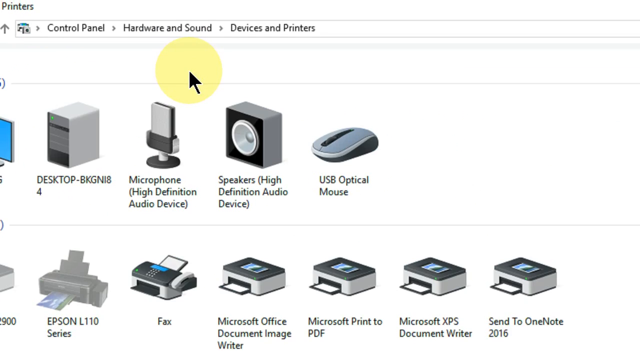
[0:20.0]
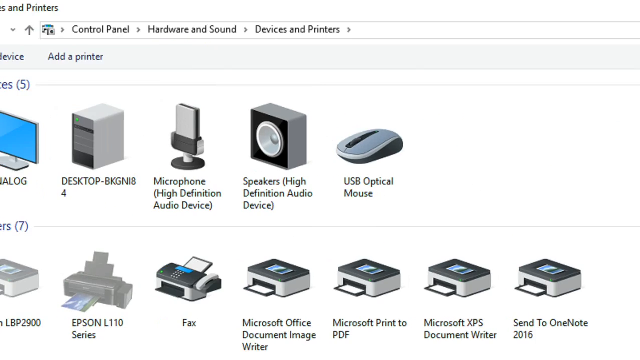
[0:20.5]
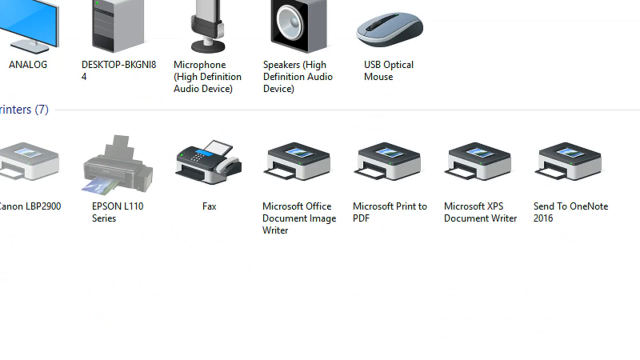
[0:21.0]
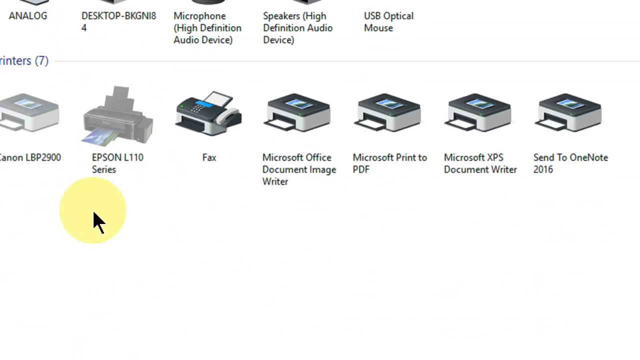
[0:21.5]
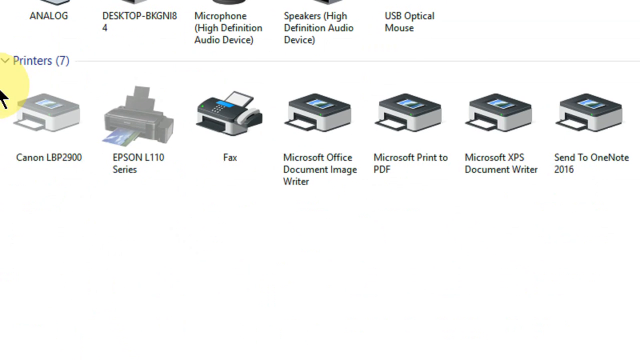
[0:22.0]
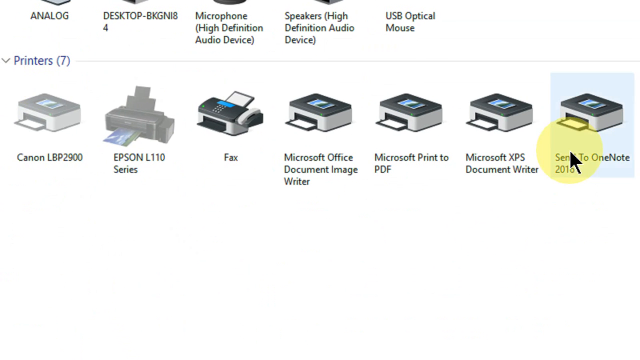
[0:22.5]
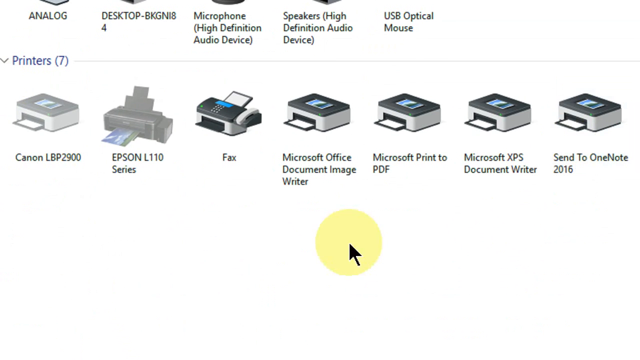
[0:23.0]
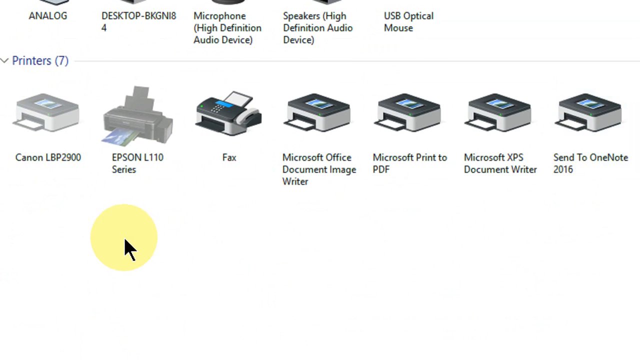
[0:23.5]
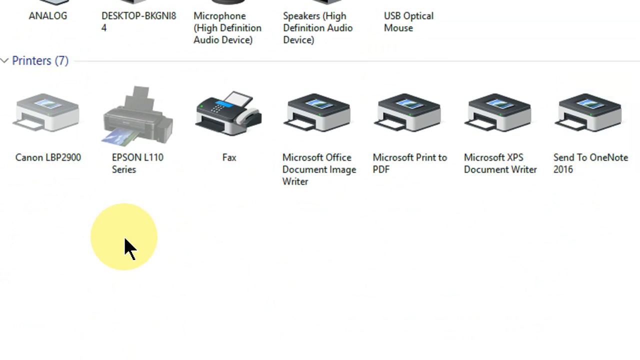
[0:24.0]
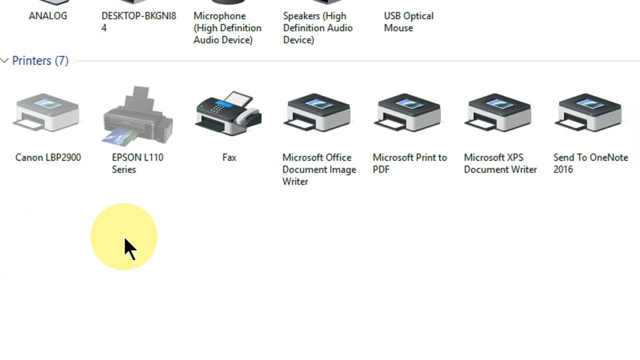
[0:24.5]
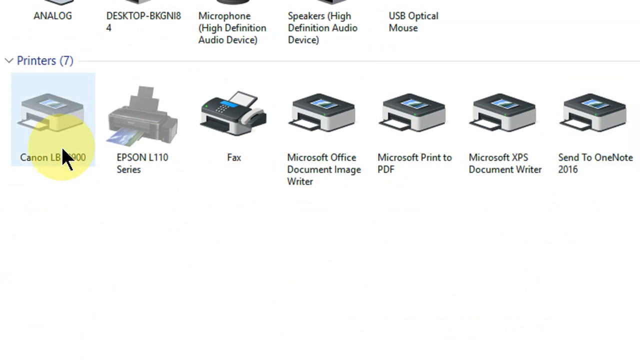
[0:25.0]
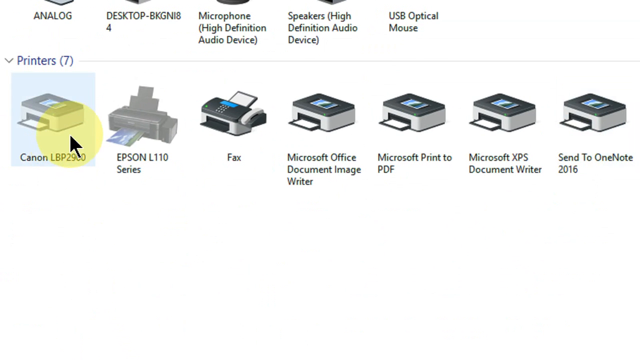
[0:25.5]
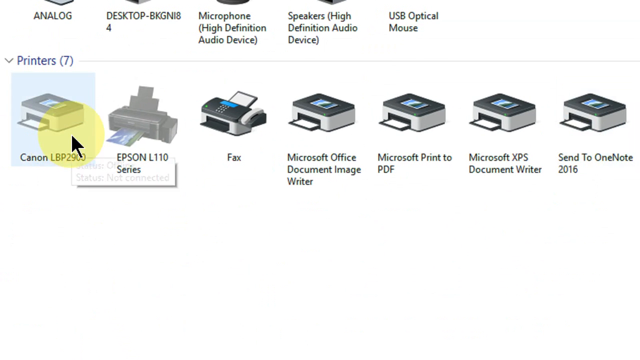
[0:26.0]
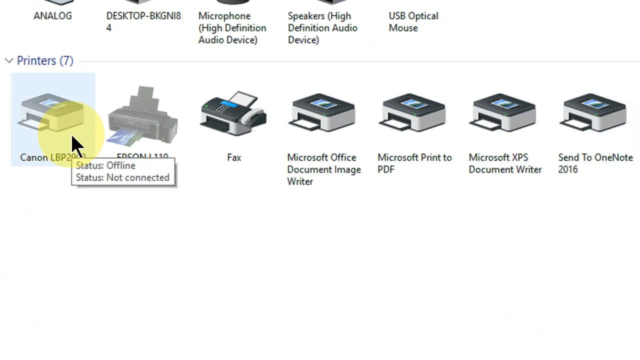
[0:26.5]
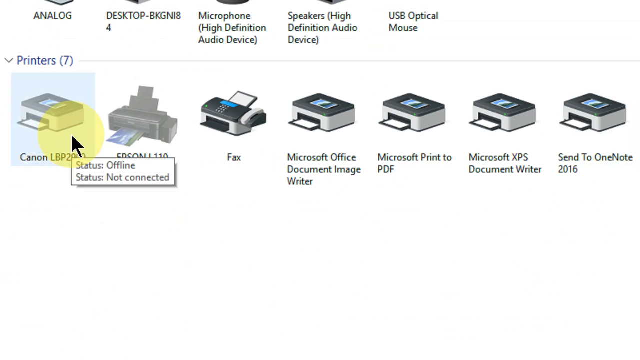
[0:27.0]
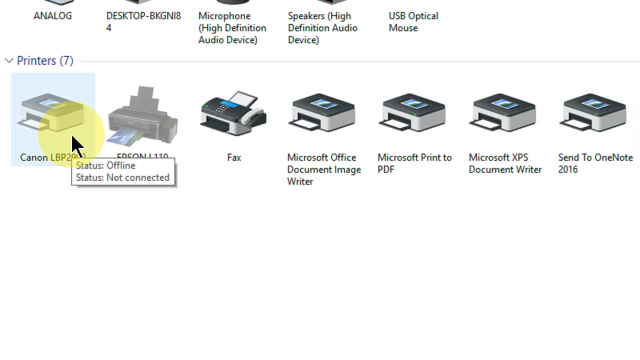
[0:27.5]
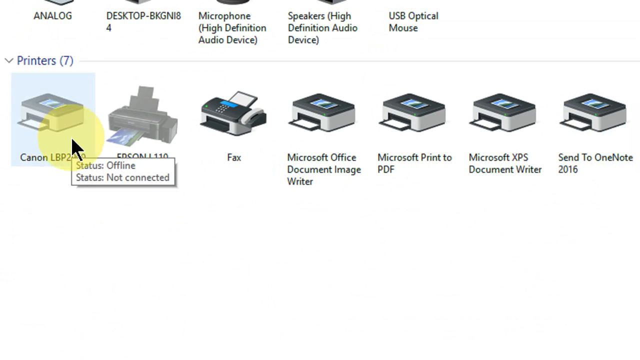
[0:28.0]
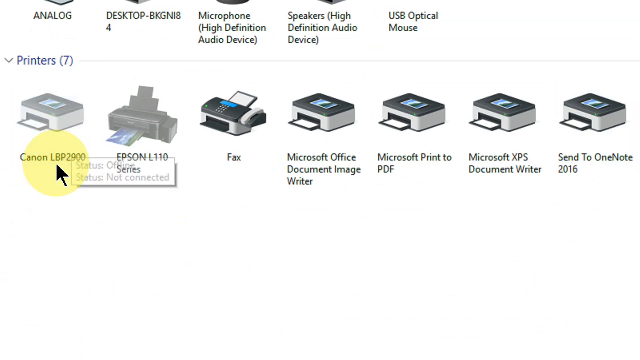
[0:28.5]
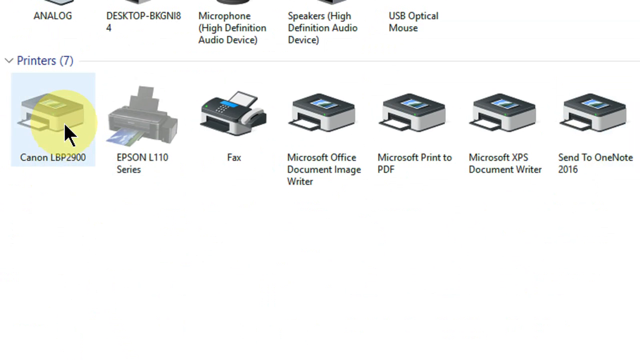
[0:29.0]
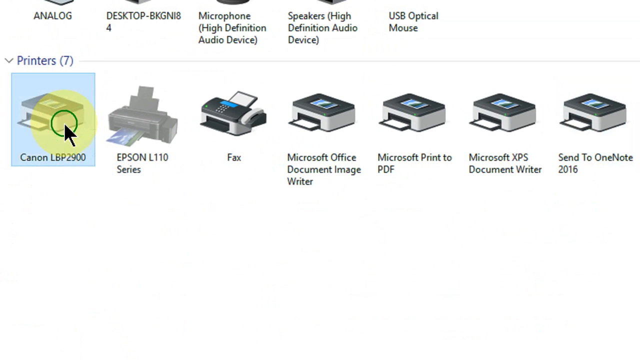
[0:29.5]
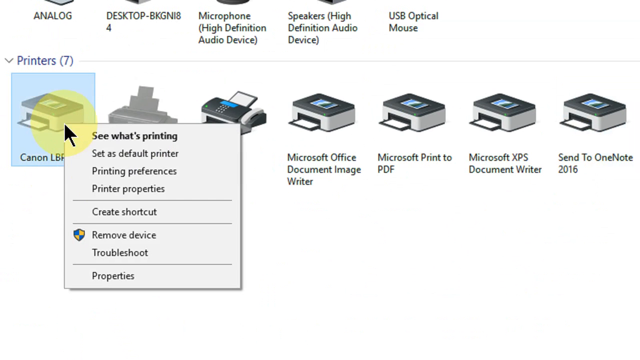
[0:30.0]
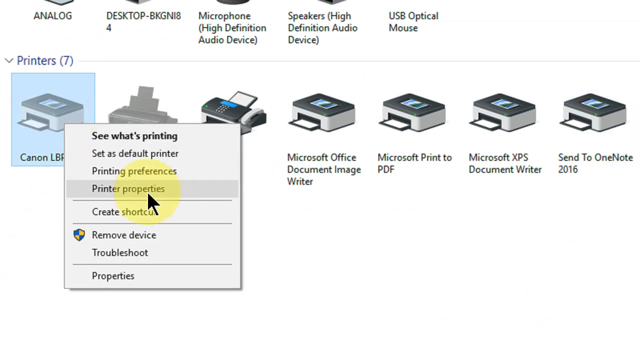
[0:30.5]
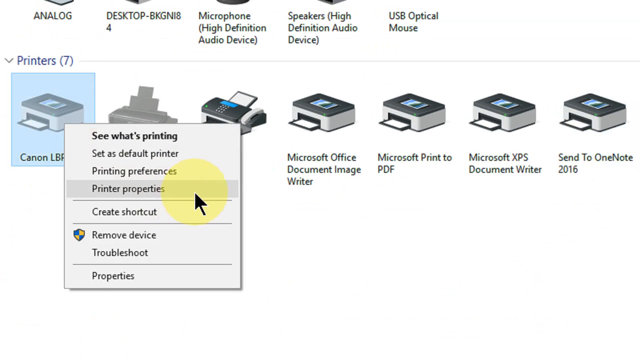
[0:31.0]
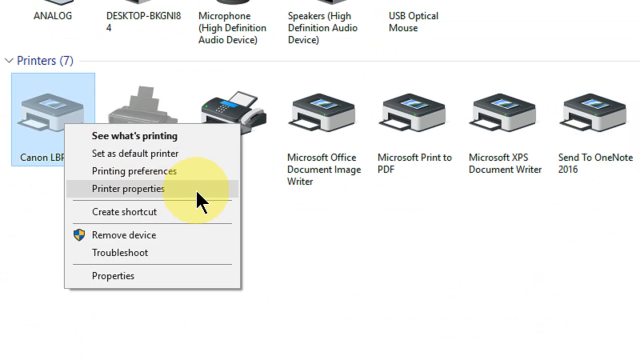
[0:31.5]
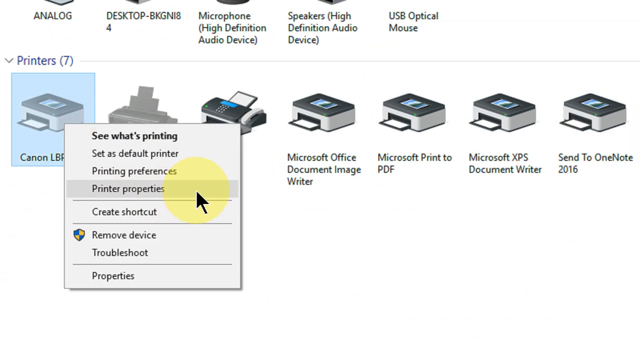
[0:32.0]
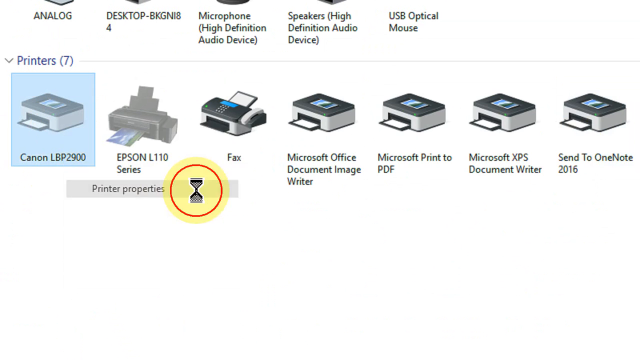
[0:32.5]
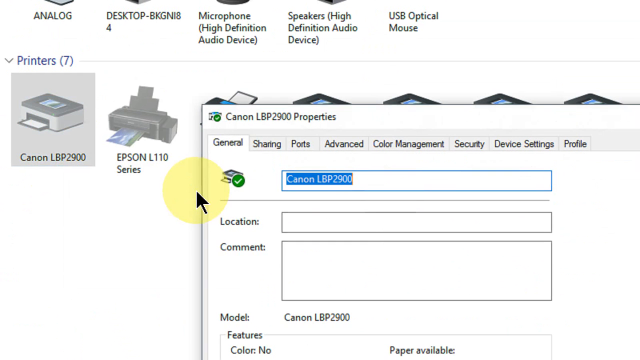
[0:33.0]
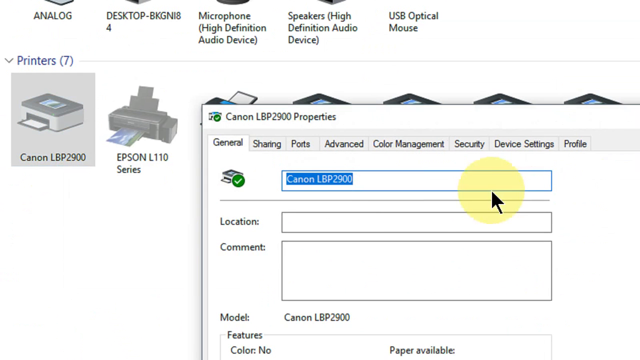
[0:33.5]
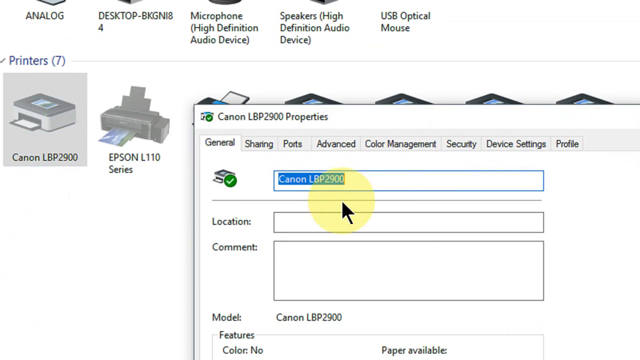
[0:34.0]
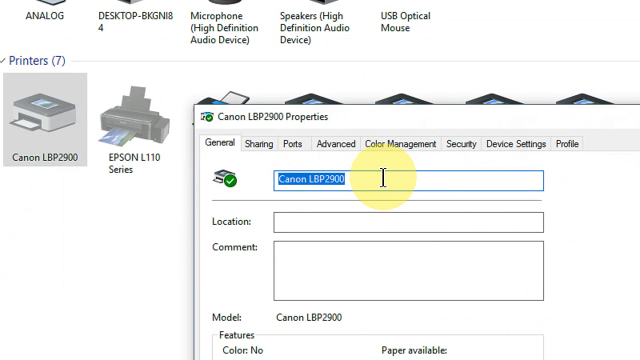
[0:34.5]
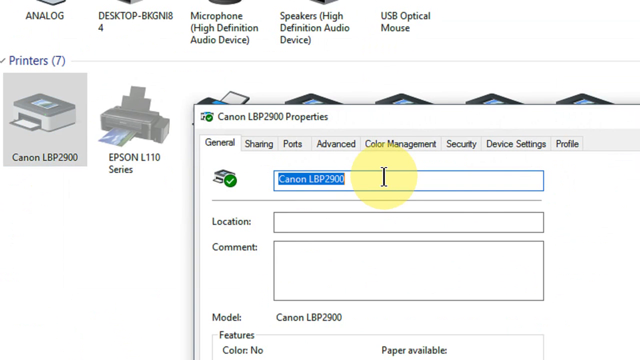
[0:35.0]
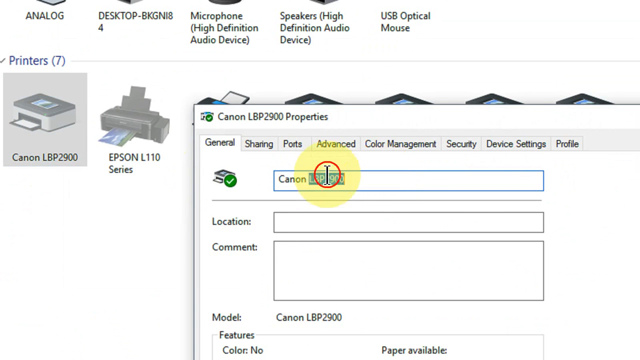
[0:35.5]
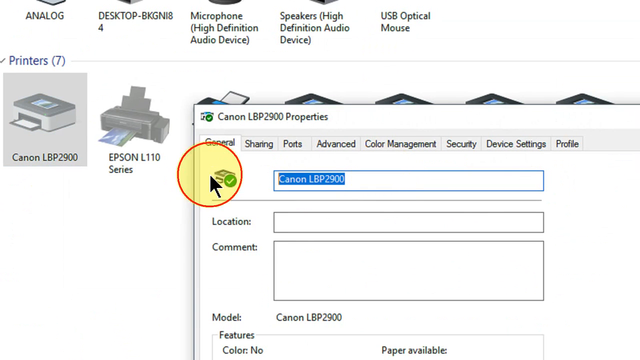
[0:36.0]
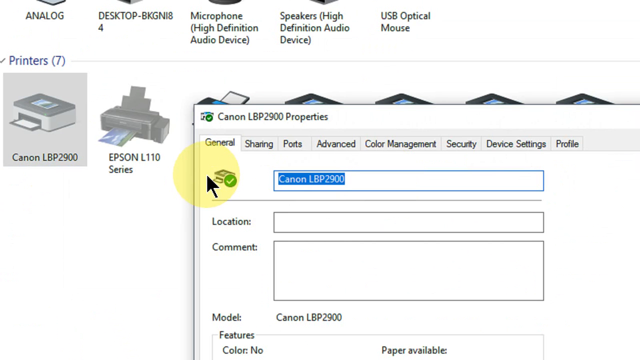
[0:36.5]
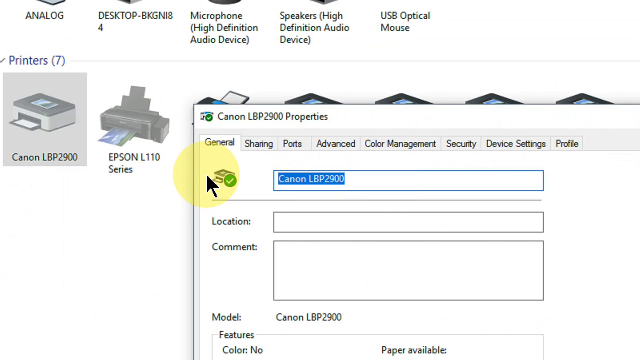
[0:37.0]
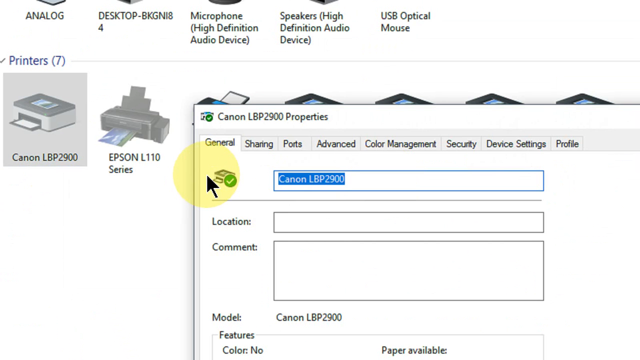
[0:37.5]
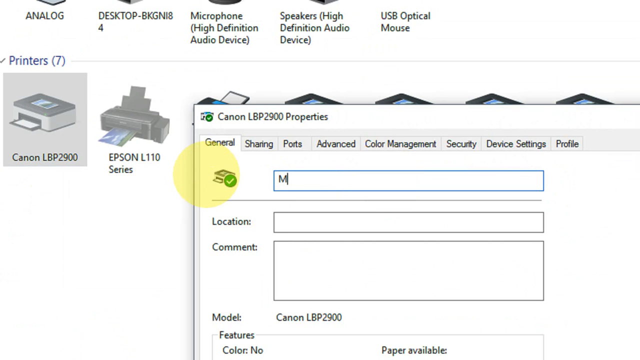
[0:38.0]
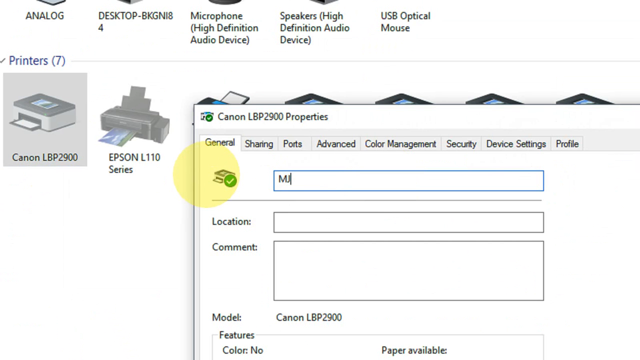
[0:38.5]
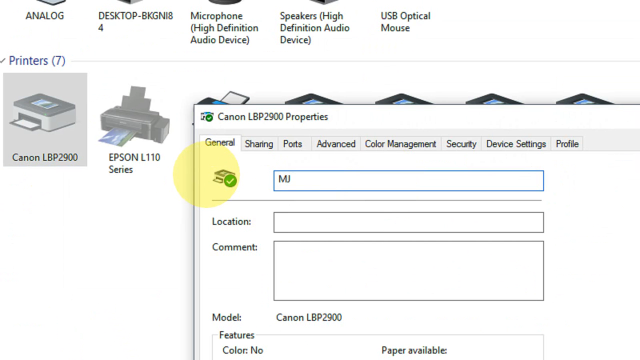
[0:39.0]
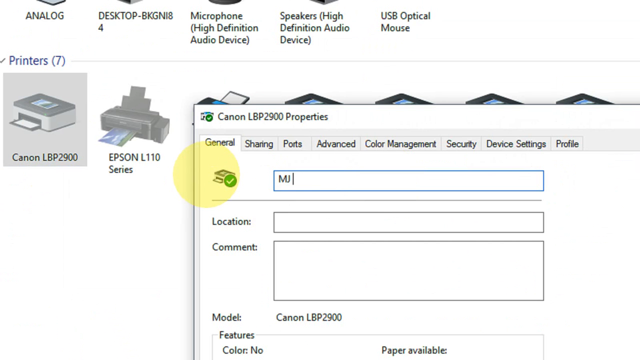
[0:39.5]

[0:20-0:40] The person apparently is about to set up a printer. He clicks on the printer named Canon LPB 2900, then on properties, which opens, and he opens the general tab of the printer's properties. The page is a mix of white and grey on all its icons, except for the pointer, which is a big yellow circle. The printer properties also have other tabs: sharing, ports, advanced, color management, security, device settings and profile.